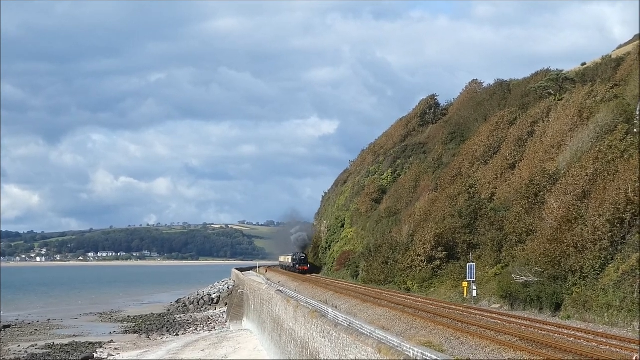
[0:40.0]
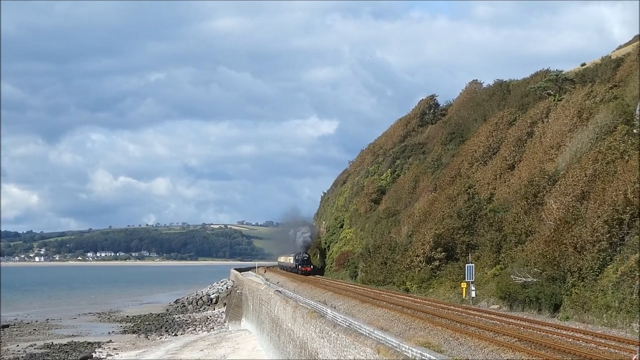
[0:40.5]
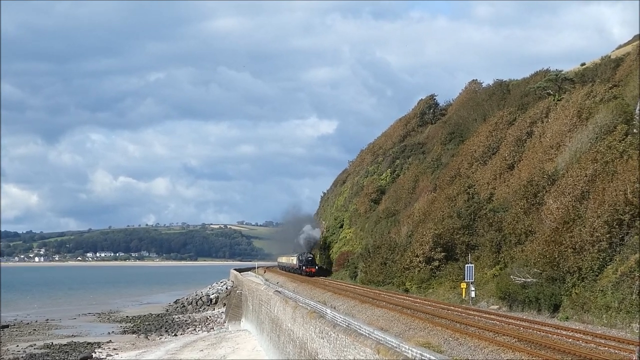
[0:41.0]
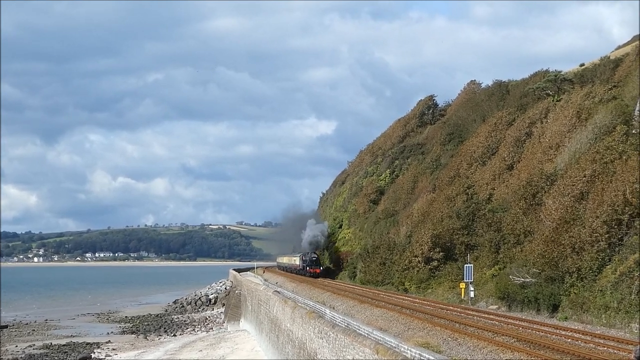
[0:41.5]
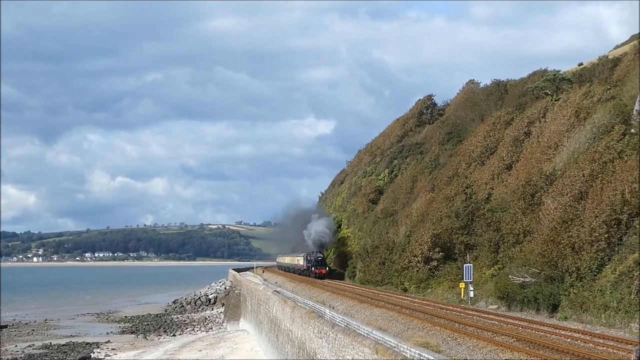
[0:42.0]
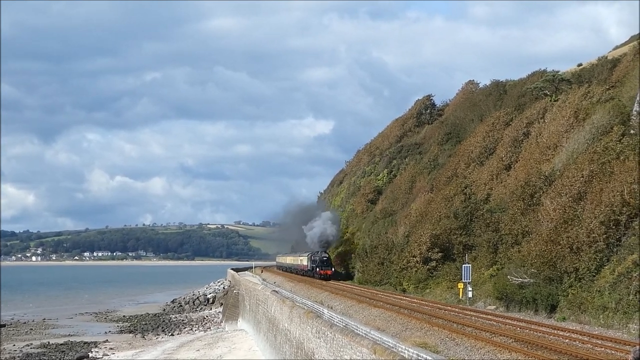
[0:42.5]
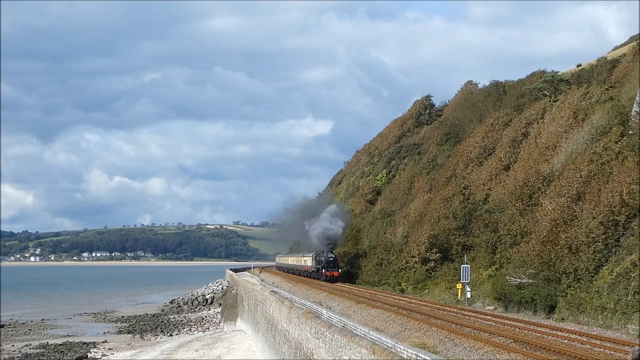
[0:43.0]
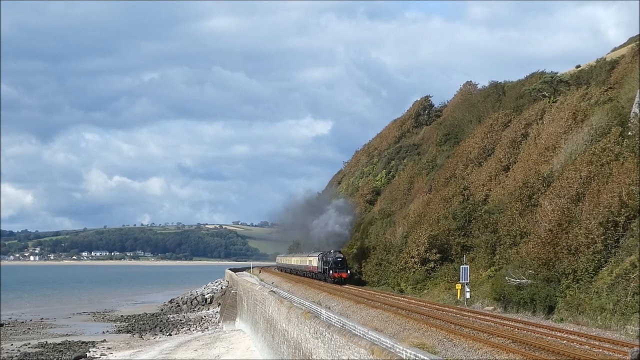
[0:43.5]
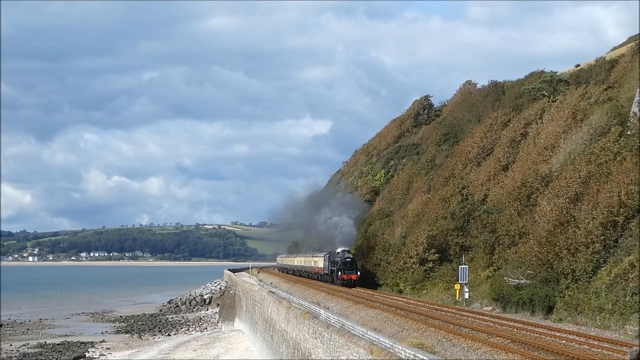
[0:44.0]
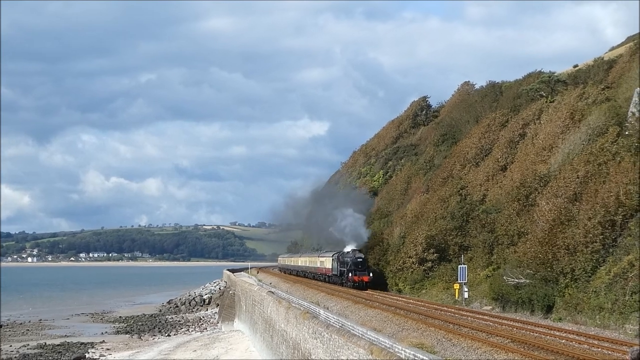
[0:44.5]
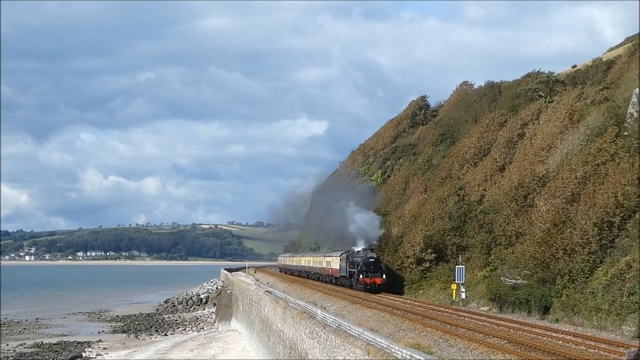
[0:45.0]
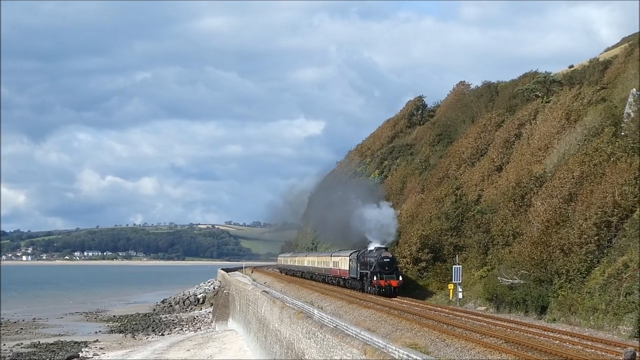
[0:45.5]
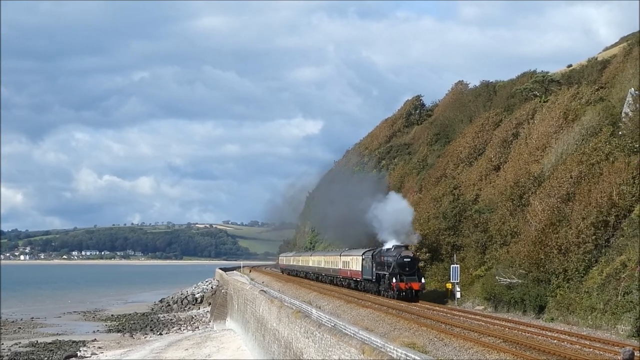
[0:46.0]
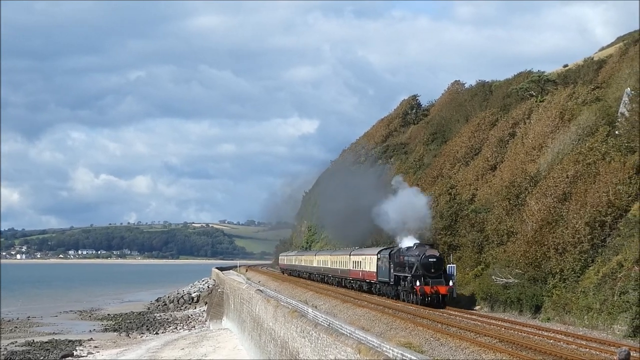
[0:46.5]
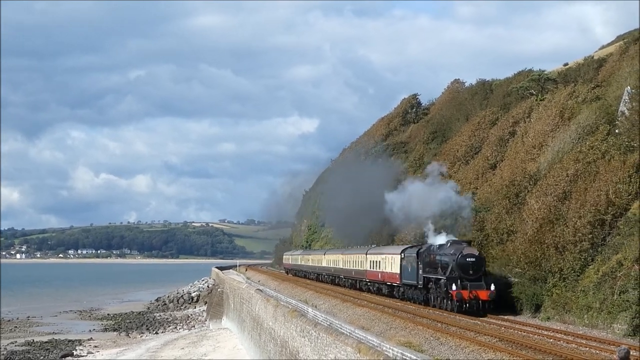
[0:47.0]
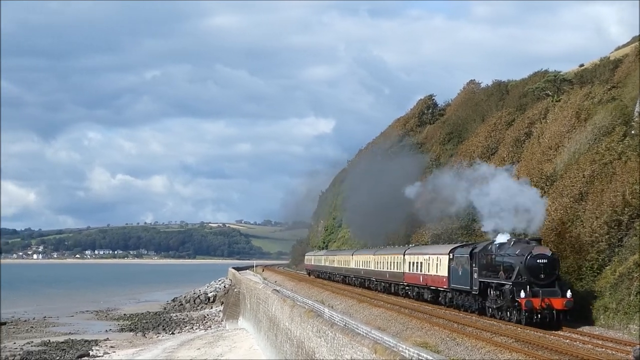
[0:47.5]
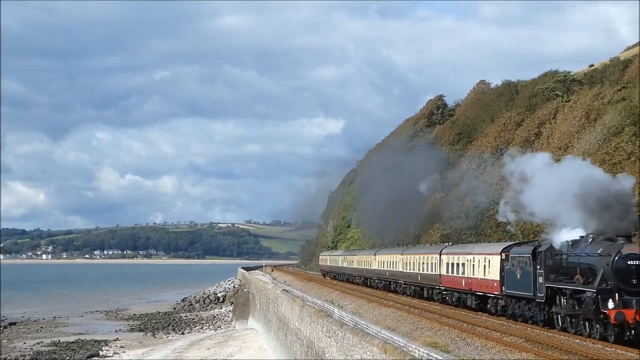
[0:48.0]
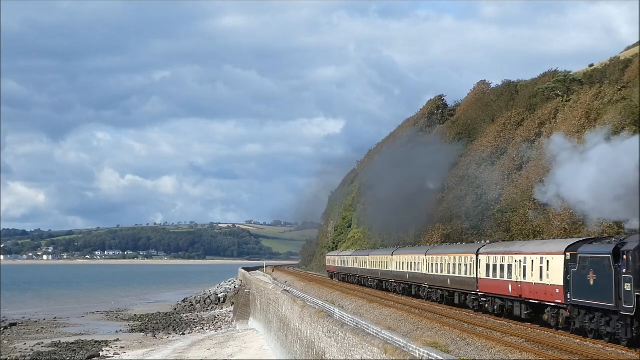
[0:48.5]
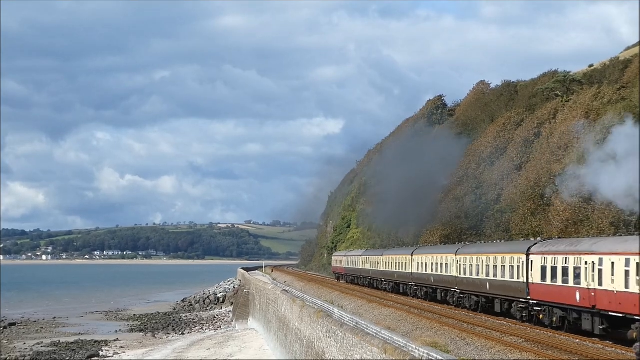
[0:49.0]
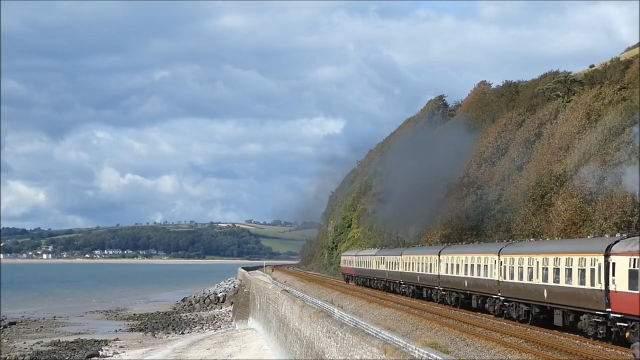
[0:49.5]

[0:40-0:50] The train is still rolling in from the center, heading toward the camera on the right side. It gives off quite a bit of smoke that is more dark gray than white, though there is definitely some white in it. The white comes directly from the top of the train and then turns gray and darker gray, trailing behind on top of the train and traveling upward toward the mountainside, rising about as high as the mountain. On the left-hand side is the water with the rocks, and there are cement walls on the side at the bottom, apparently to protect the train from falling or an accident. The train tracks are also visible.